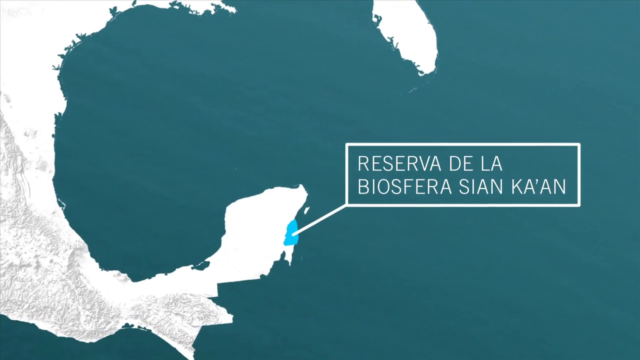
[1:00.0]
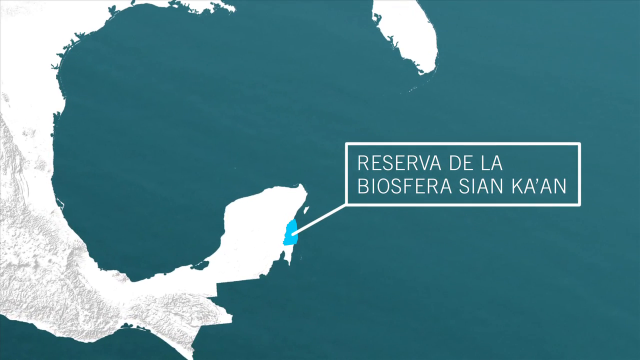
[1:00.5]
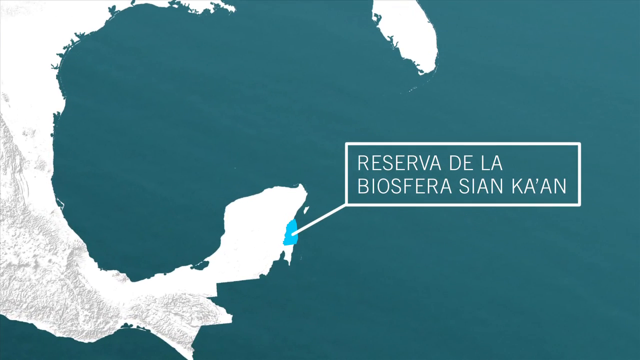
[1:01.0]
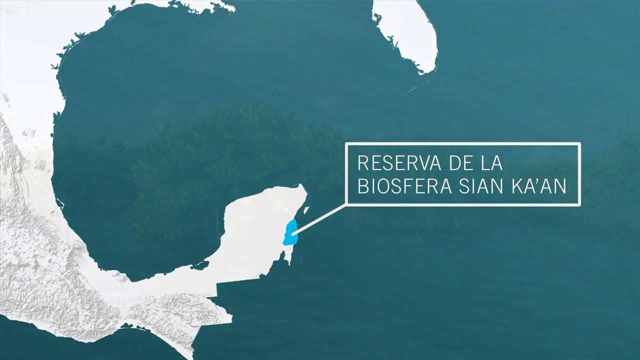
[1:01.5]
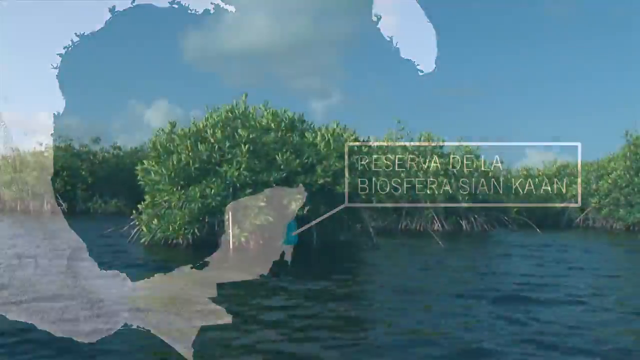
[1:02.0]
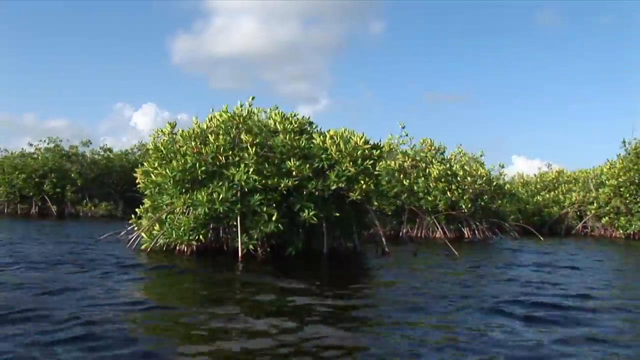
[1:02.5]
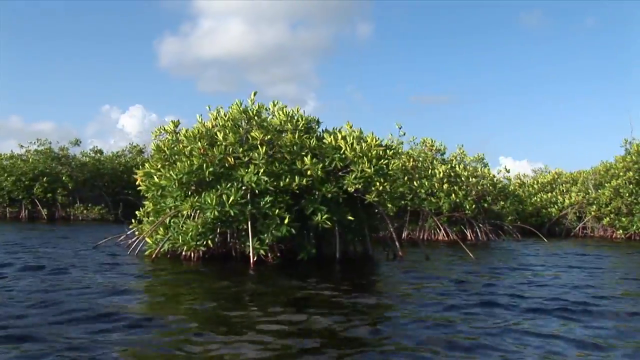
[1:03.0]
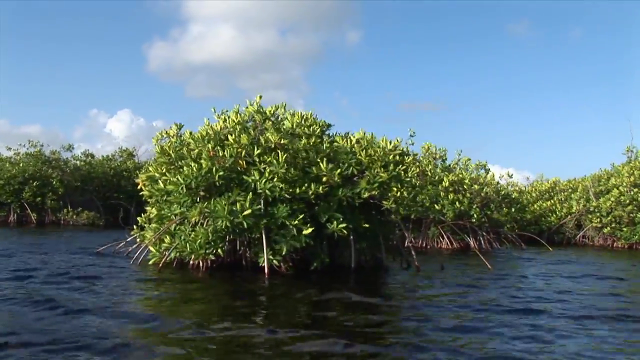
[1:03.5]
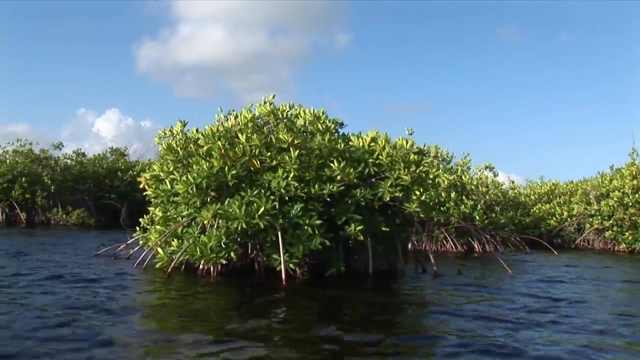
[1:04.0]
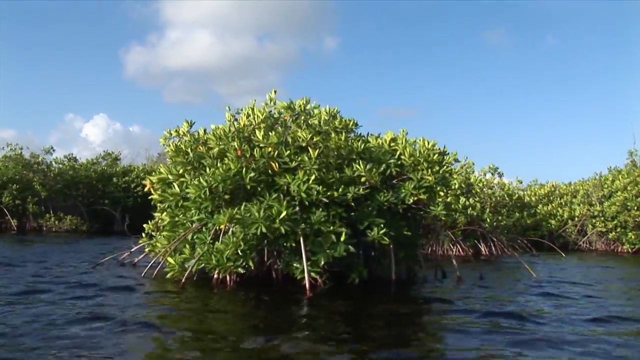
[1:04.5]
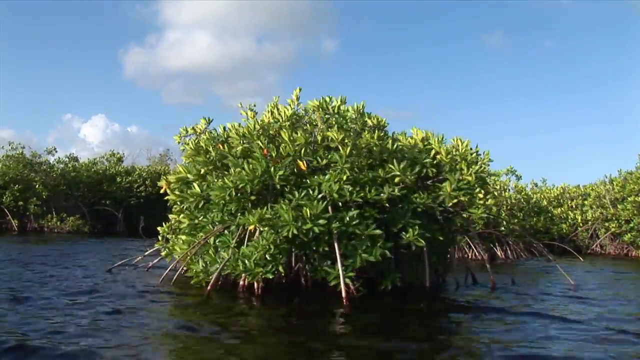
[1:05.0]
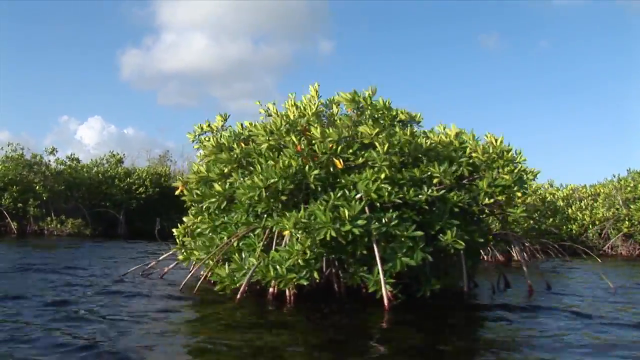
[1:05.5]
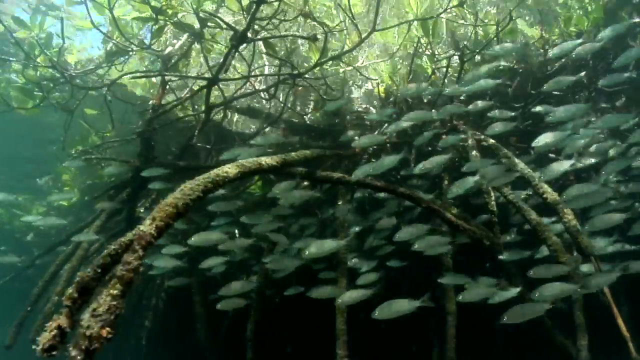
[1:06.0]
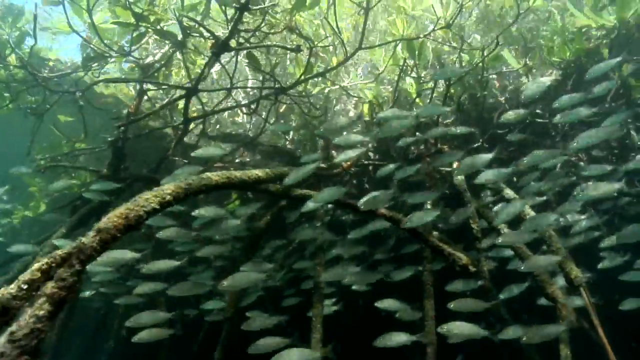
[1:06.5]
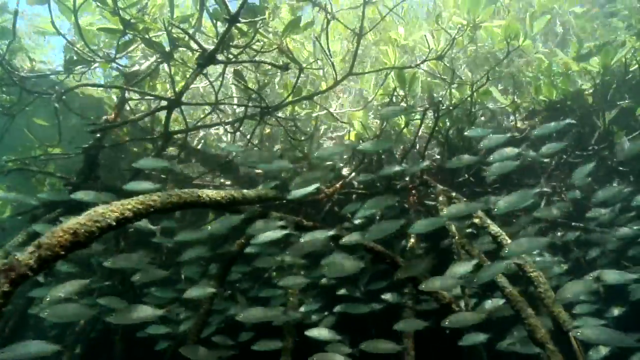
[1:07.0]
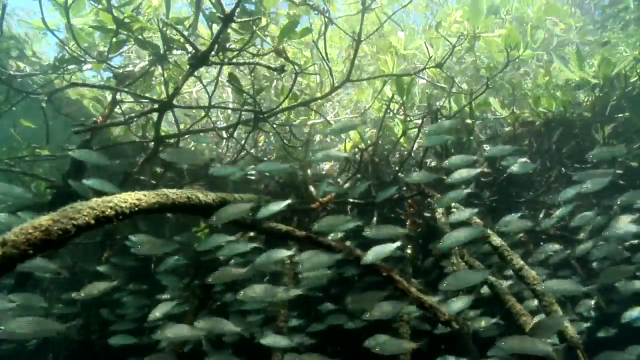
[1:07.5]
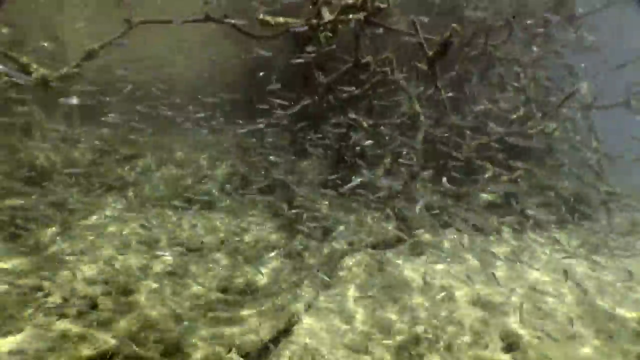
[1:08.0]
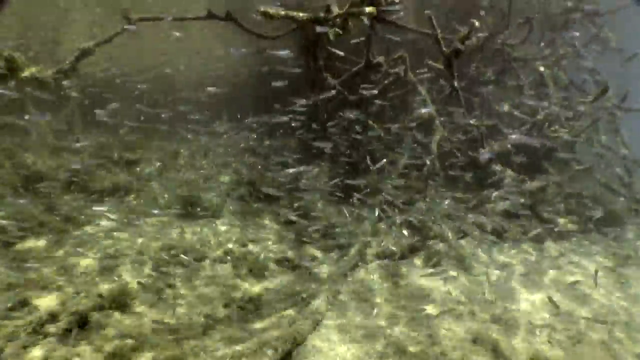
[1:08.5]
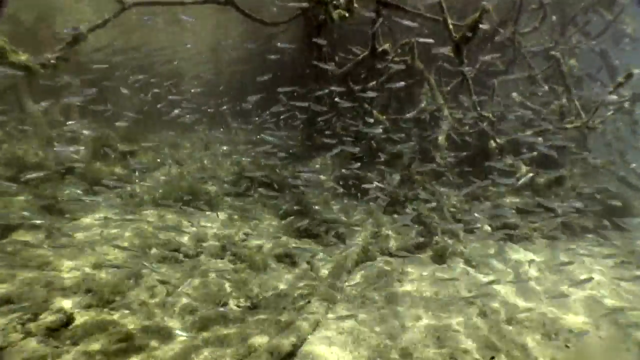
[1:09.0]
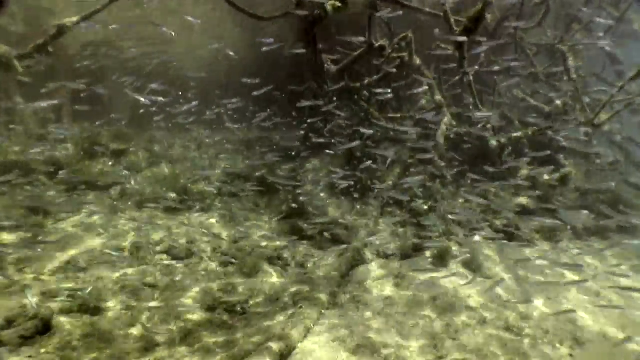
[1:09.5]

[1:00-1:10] A caption pops up reading "Reserva de la Biosfera" followed by a name ending in "Kan," pointing to another little blue area on the map. A bunch of trees follows, possibly mangroves. Footage from under the trees shows many schools of fish, with fish of all sizes, small and big.